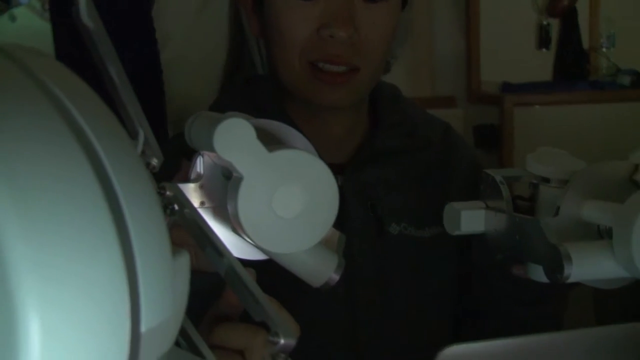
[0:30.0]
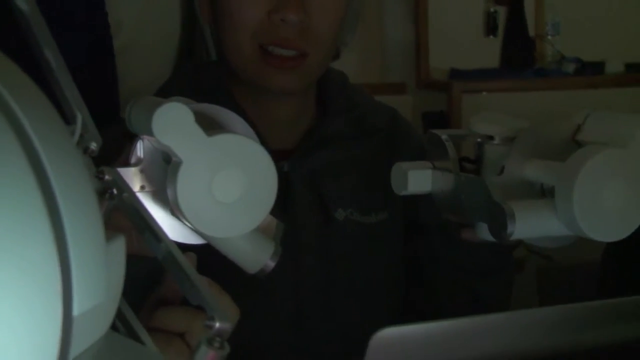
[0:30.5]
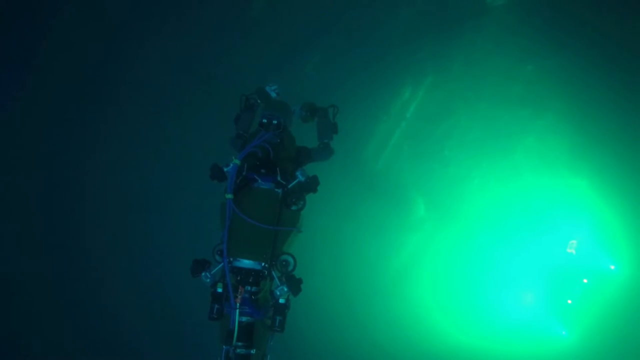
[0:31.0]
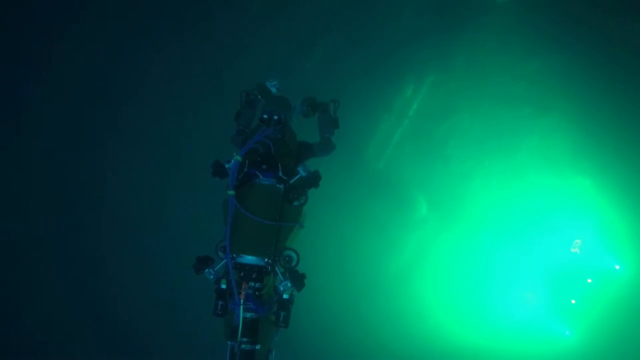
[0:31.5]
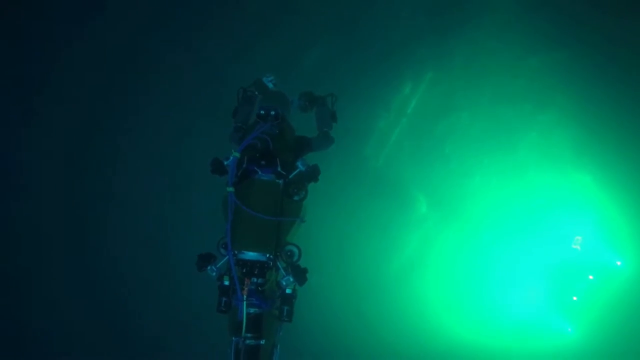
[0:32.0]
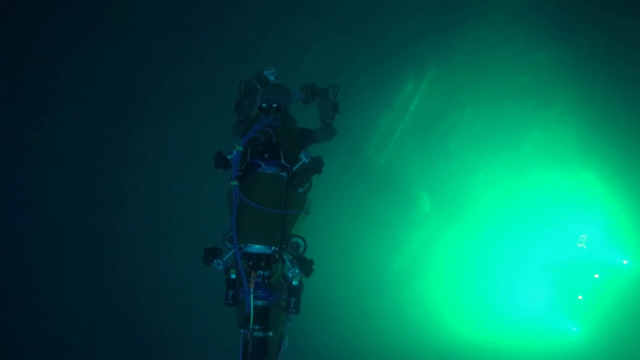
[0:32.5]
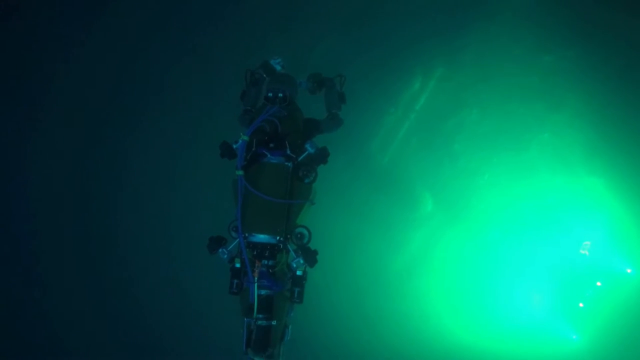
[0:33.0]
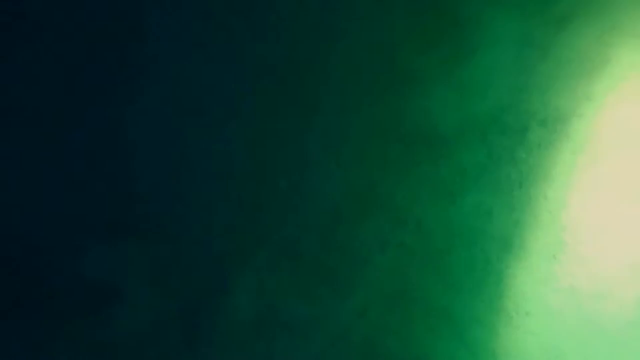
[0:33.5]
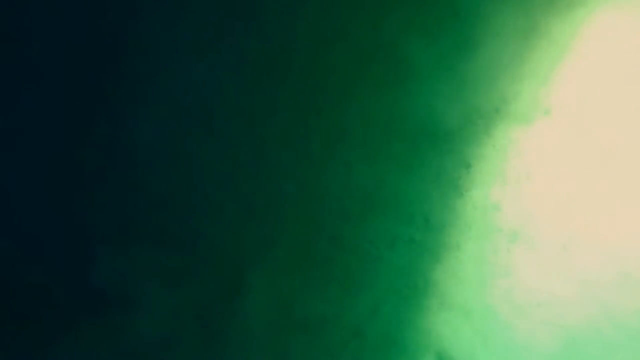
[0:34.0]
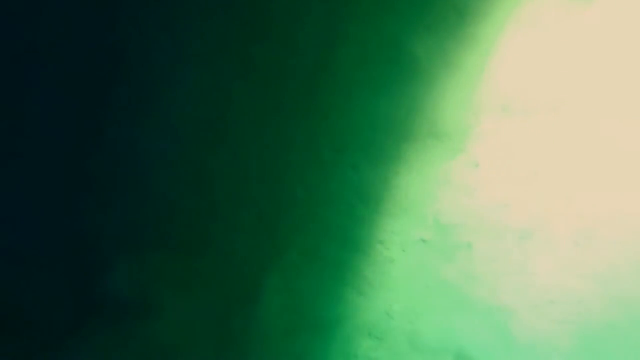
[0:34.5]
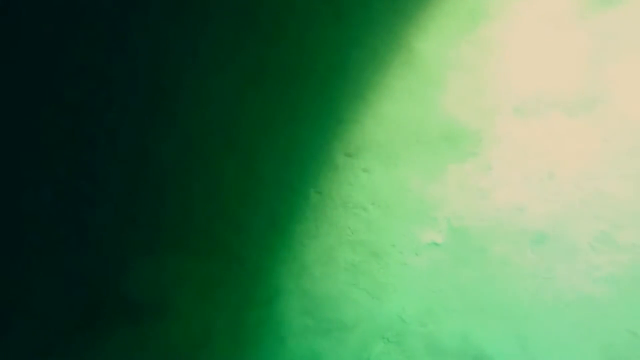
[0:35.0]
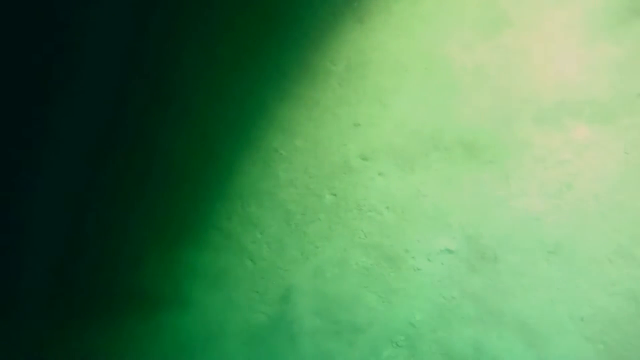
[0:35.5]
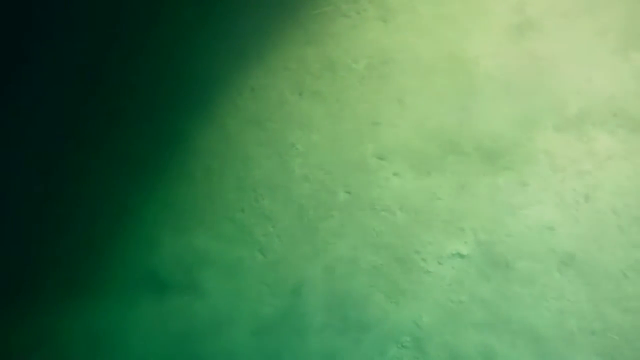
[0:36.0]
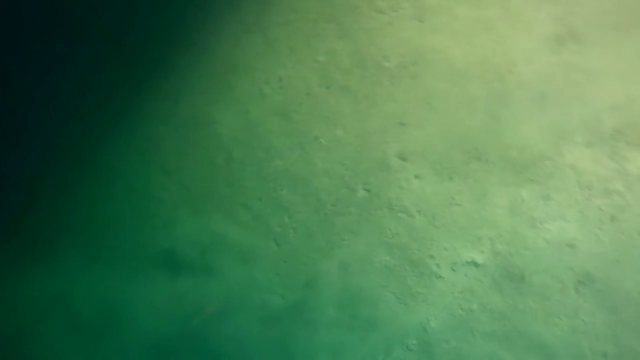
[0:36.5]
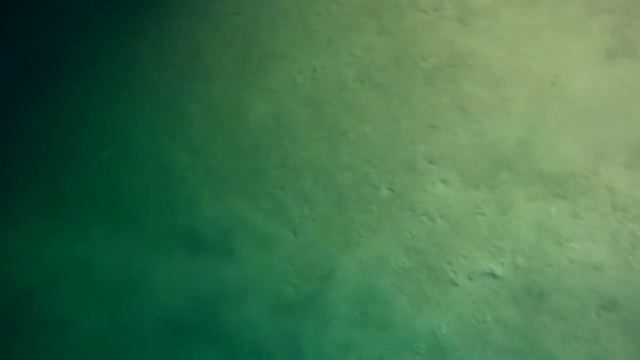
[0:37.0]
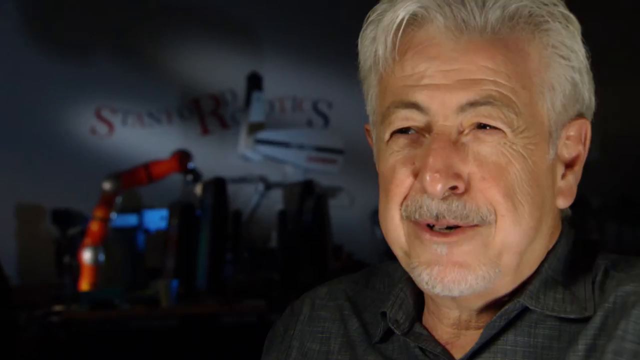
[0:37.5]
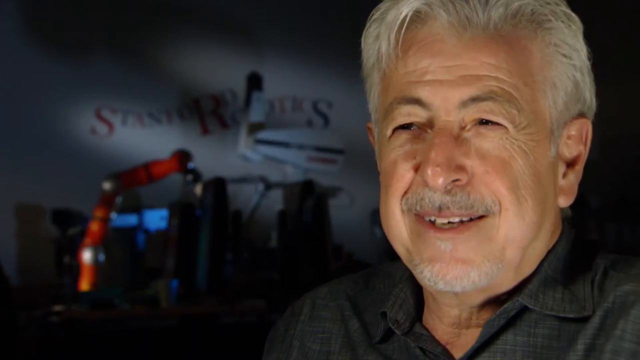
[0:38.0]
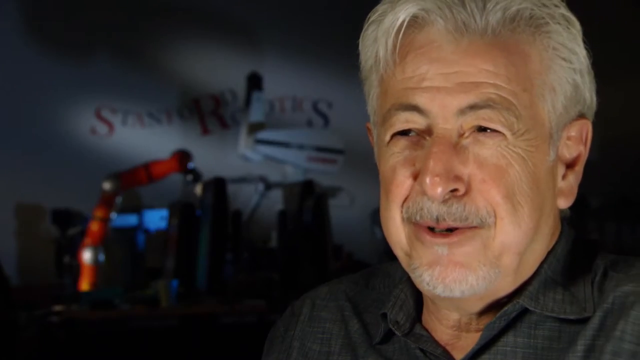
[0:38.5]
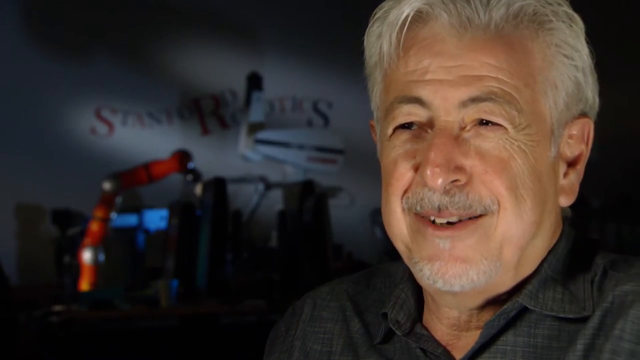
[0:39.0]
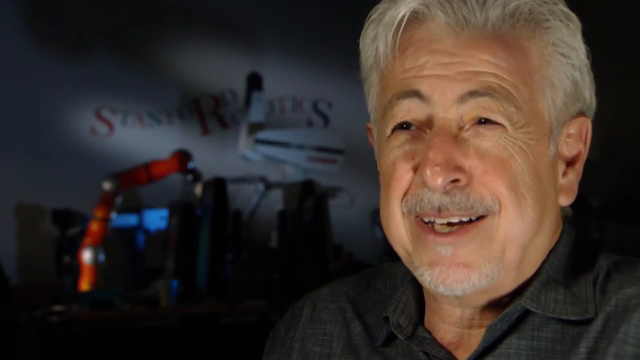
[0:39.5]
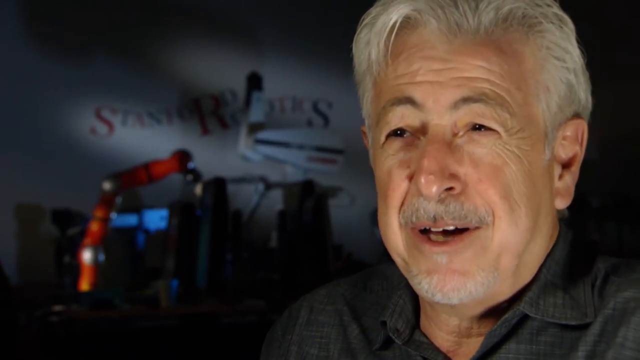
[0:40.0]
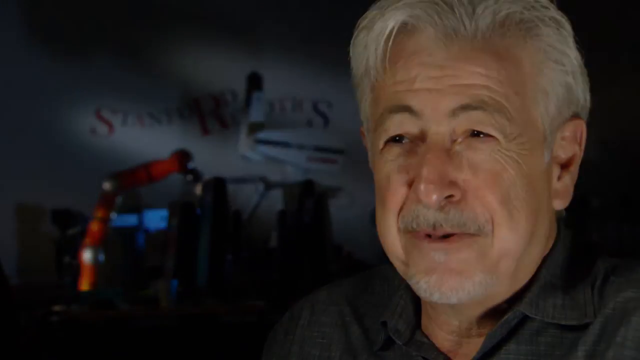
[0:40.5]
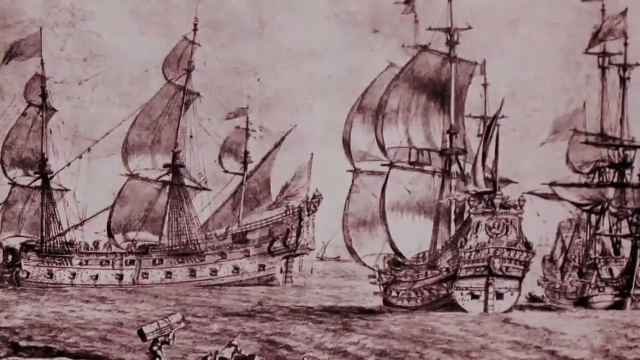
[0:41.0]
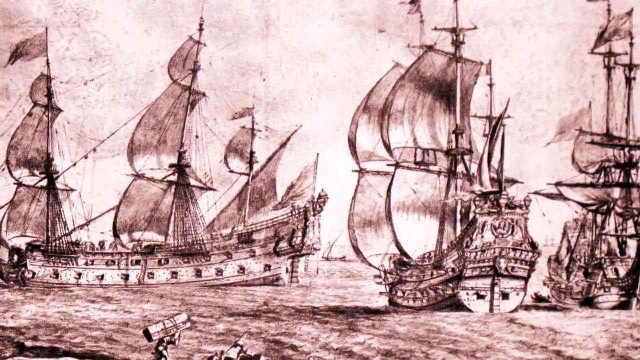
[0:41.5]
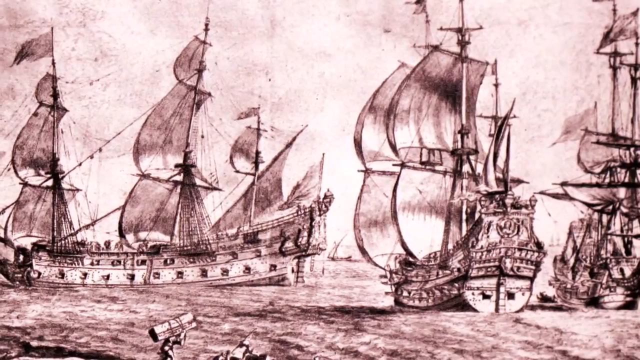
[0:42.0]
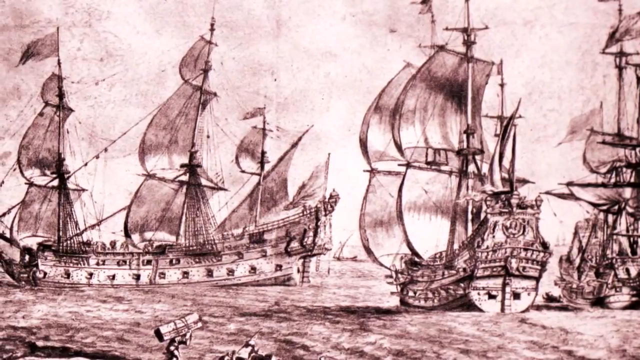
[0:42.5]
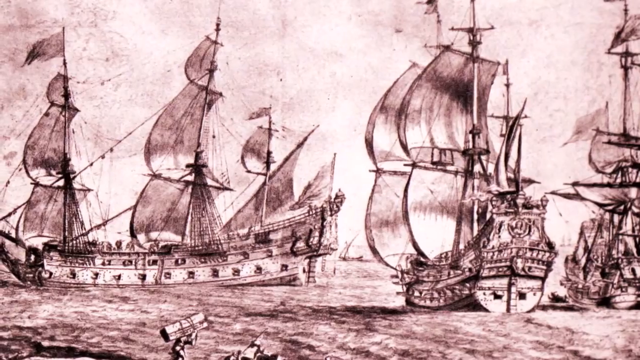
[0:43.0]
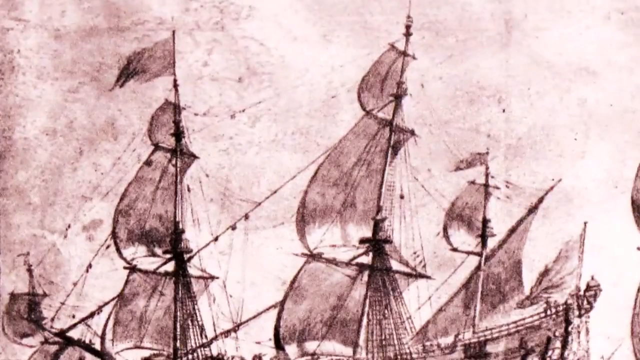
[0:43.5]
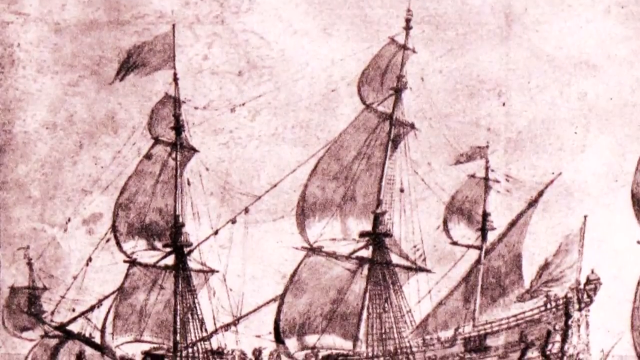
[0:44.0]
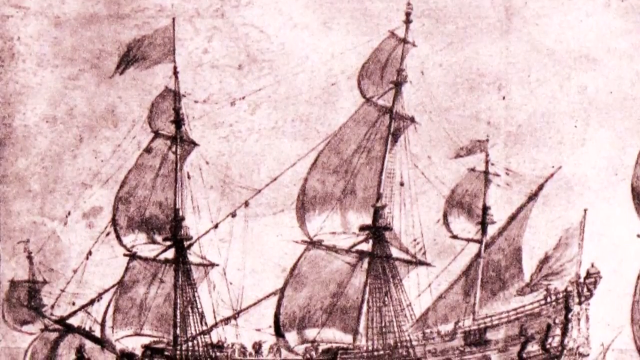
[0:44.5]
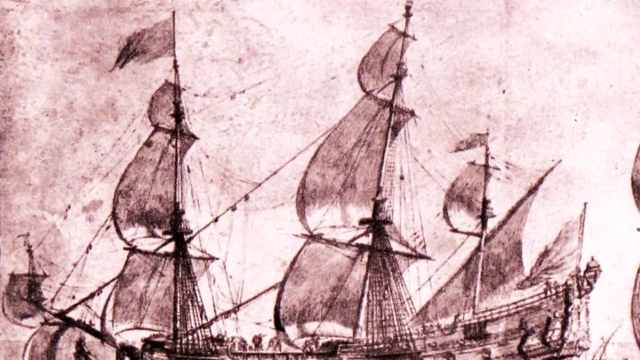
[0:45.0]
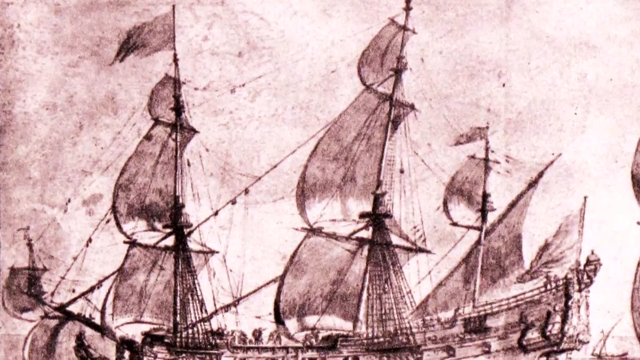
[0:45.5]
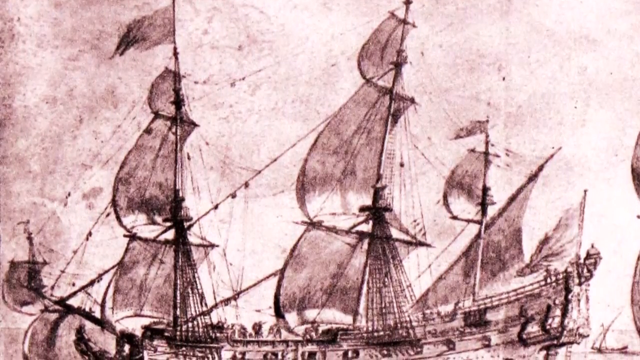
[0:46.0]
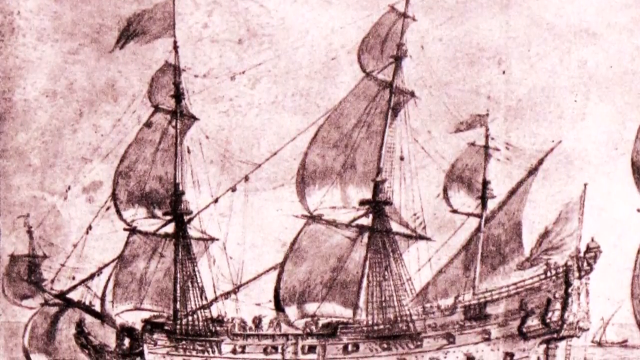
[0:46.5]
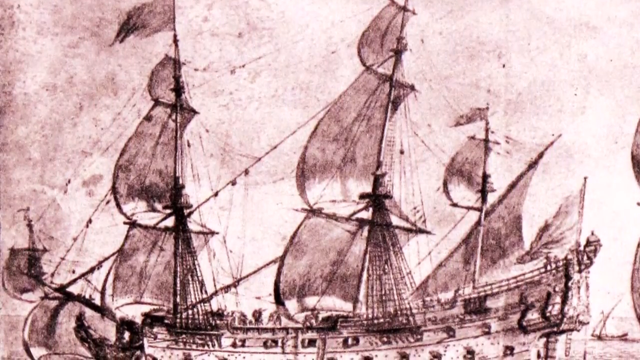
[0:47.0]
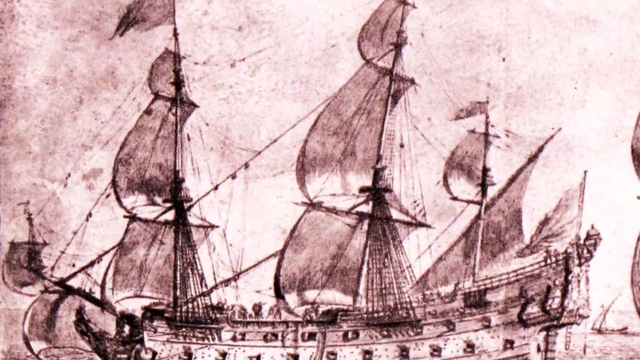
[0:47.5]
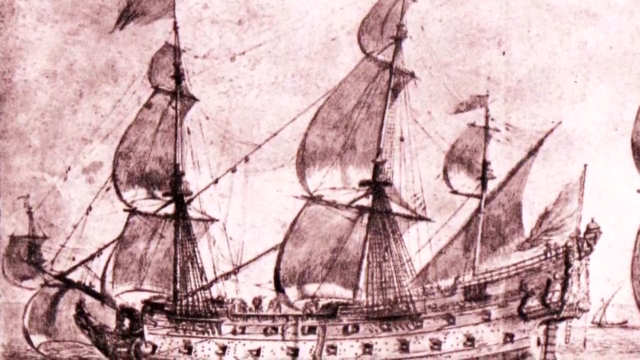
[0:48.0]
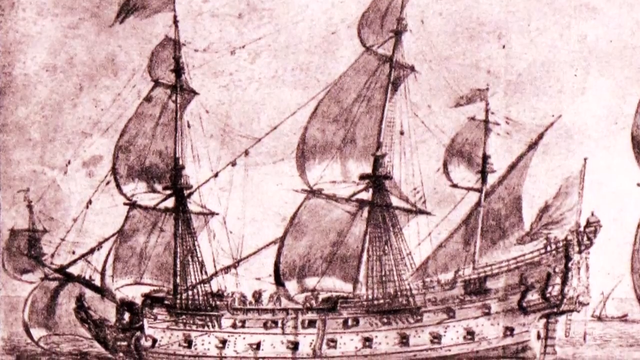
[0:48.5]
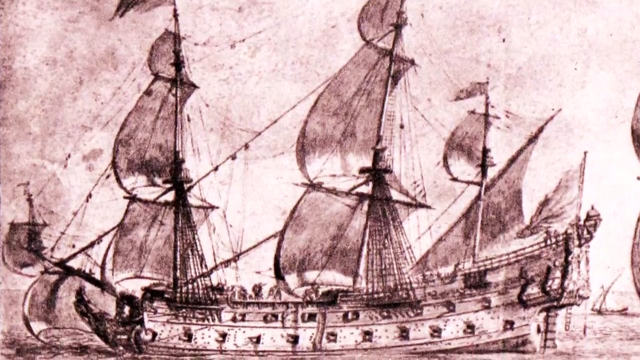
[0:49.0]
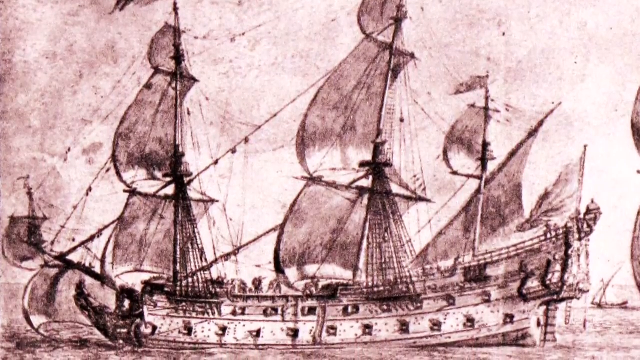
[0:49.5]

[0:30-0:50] The scene is the inside of what is maybe some kind of laboratory or research facility. Instead of being underwater, the view shows a person holding equipment with lights up to the camera; the equipment seems almost to resemble something from an eye doctor's or dentist's office. Soon after, the view changes to what looks like another type of robot floating underwater. The water is very dark, and the robot is only really visible because of a light glowing beneath it, probably a research-grade light. A flash from that light then illuminates the ground floor some more. Next, an elderly Caucasian man is shown talking as though he is being interviewed. His background is hard to make out, but there appears to be some small machinery or engineering tools behind him. He smiles while talking. The video then transitions to drawn black-and-white images of ships of the type seen during the 1800s.